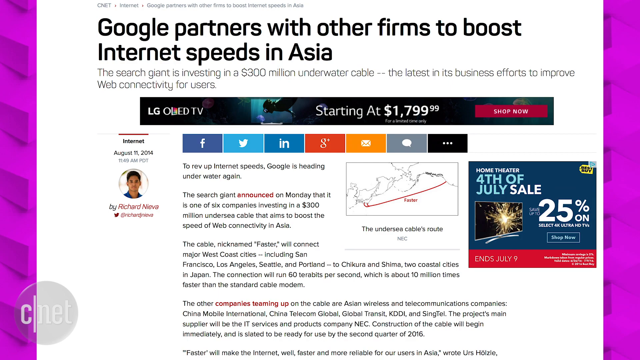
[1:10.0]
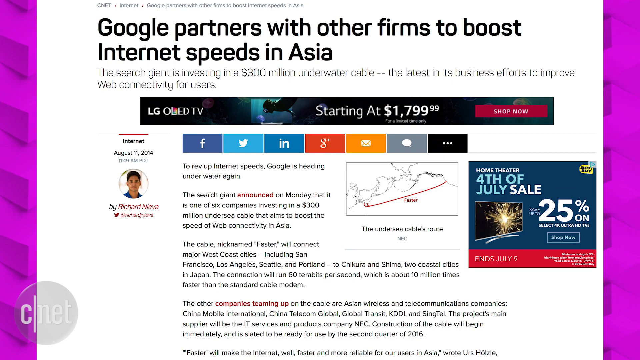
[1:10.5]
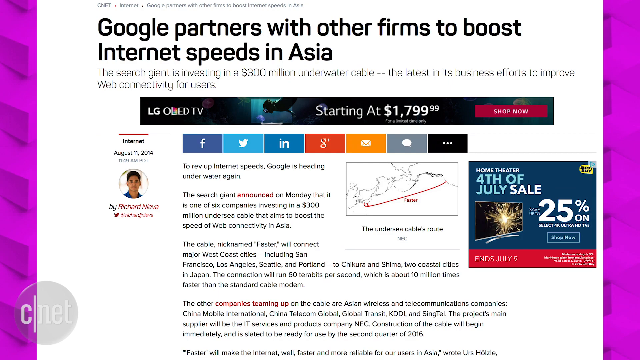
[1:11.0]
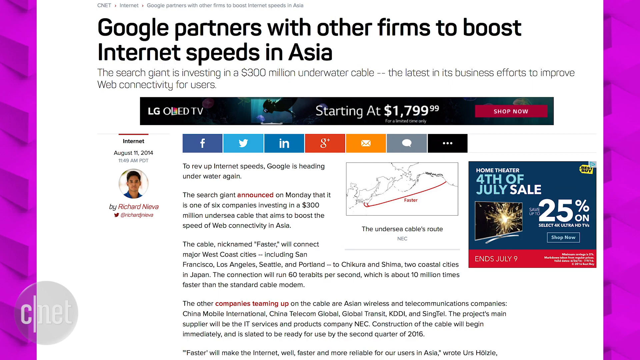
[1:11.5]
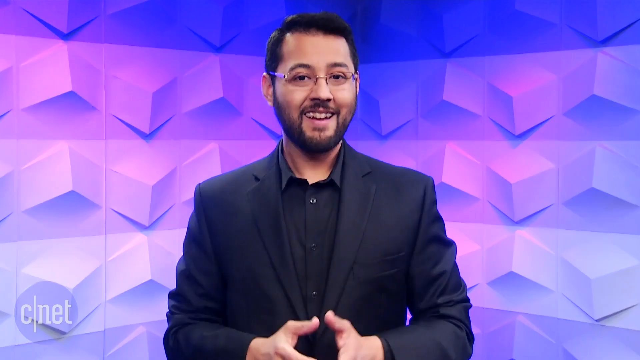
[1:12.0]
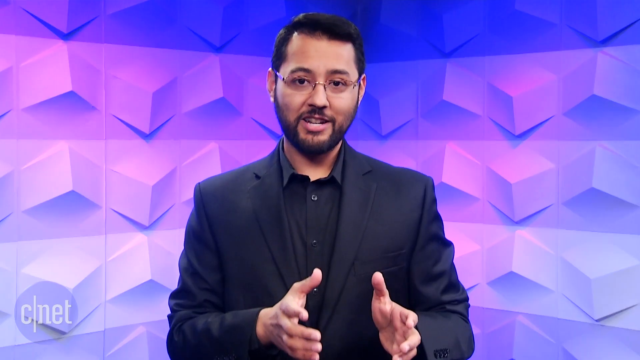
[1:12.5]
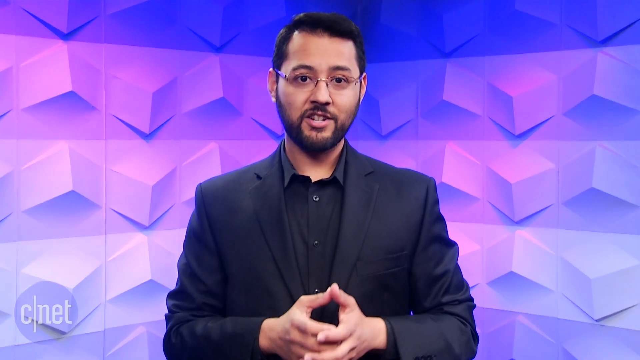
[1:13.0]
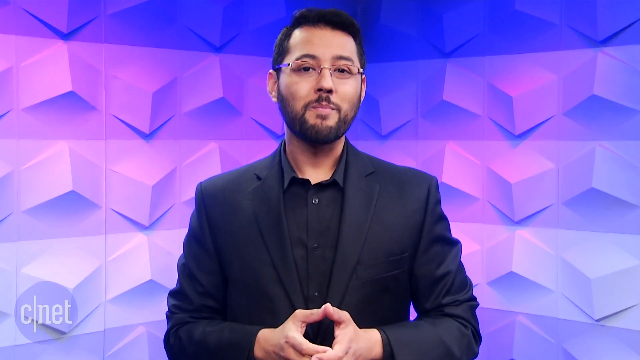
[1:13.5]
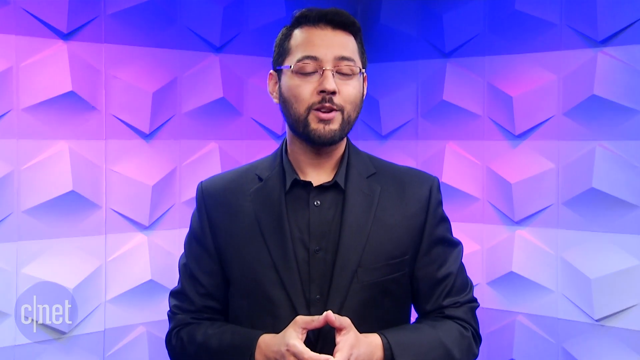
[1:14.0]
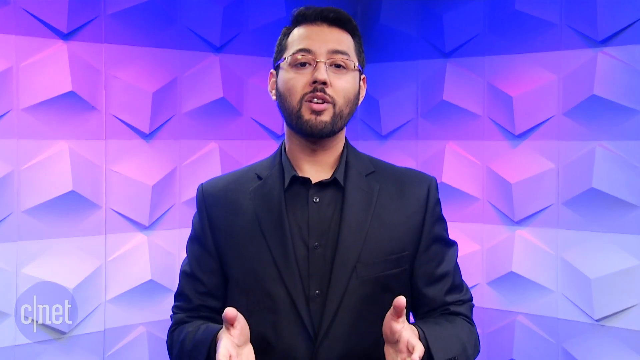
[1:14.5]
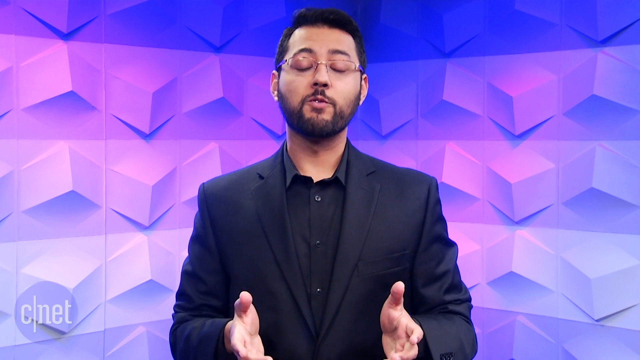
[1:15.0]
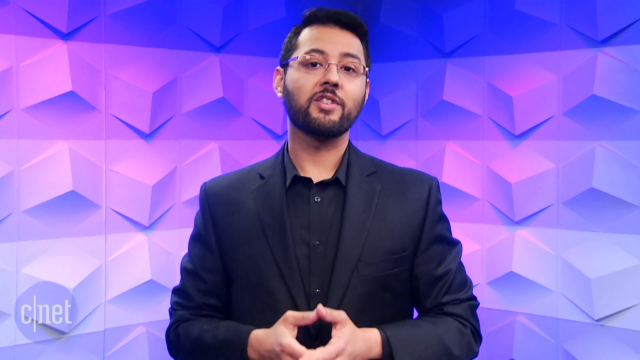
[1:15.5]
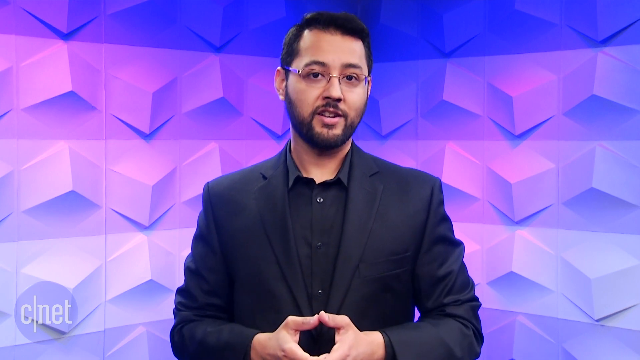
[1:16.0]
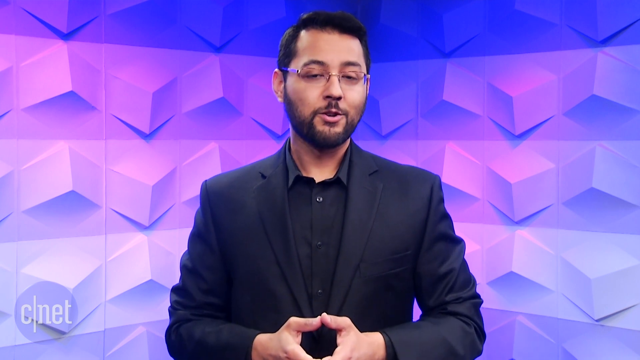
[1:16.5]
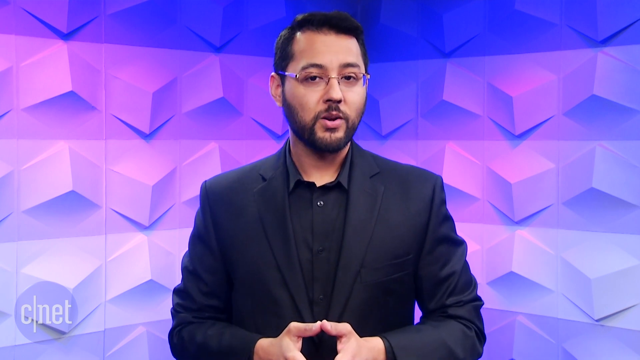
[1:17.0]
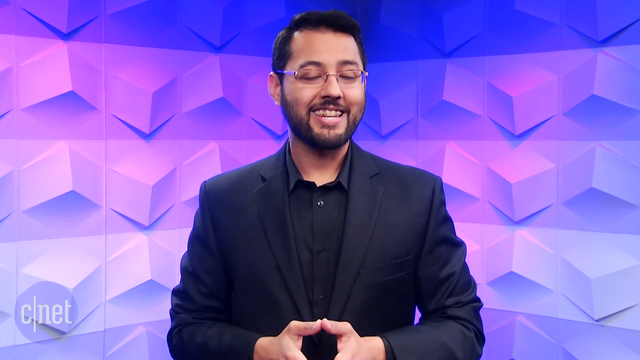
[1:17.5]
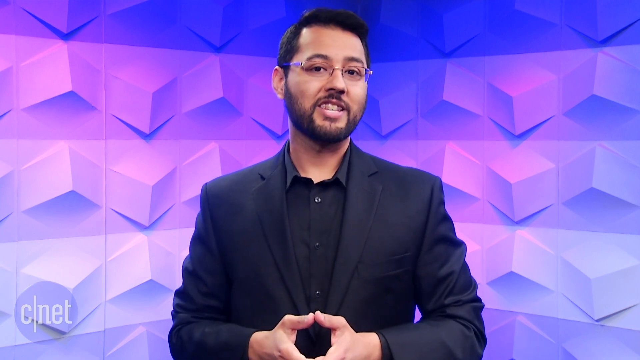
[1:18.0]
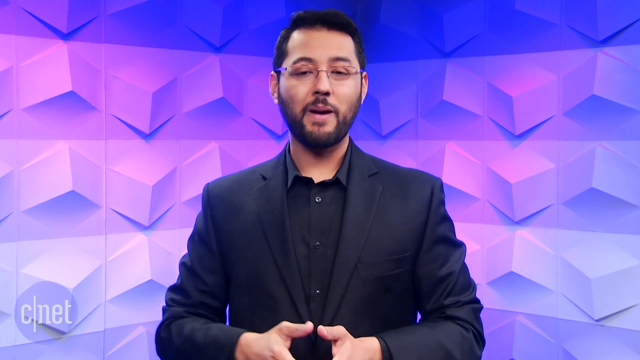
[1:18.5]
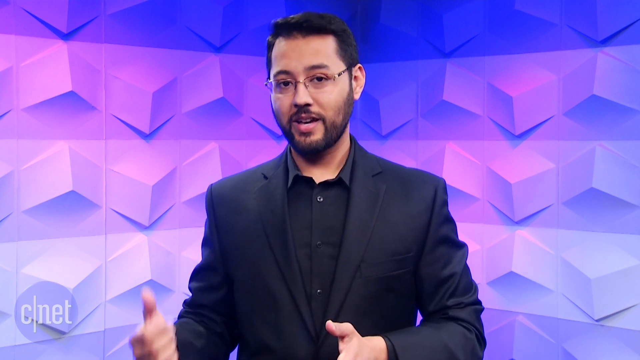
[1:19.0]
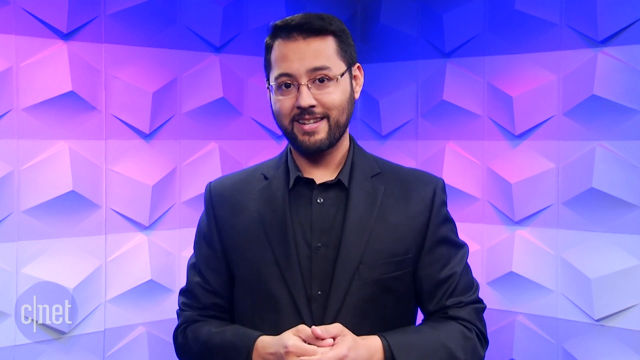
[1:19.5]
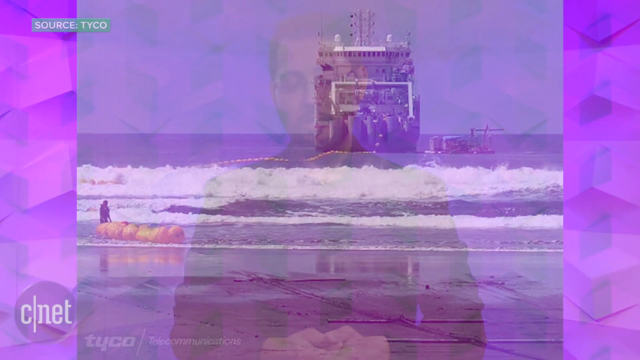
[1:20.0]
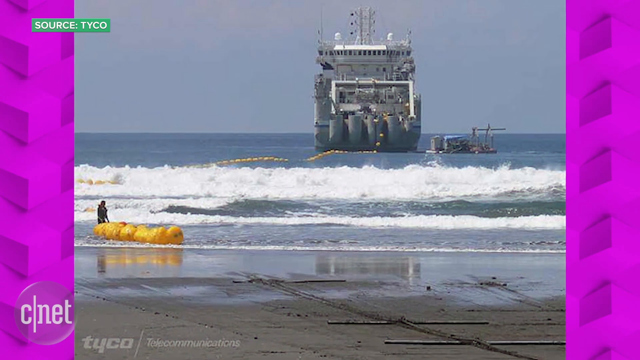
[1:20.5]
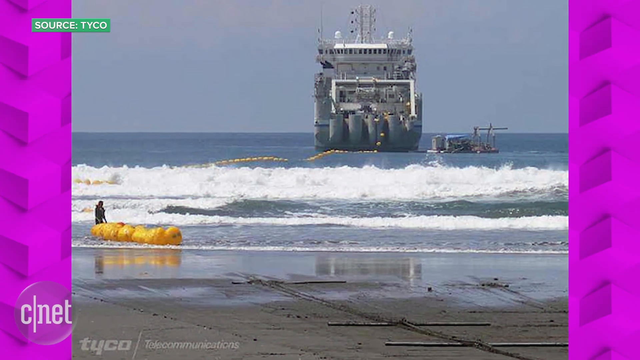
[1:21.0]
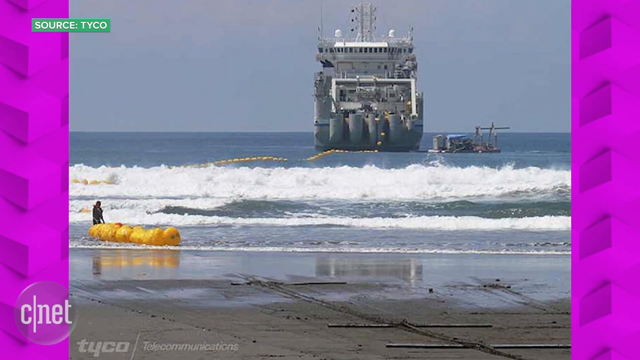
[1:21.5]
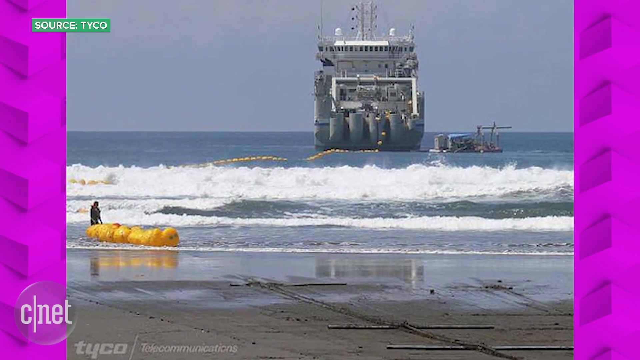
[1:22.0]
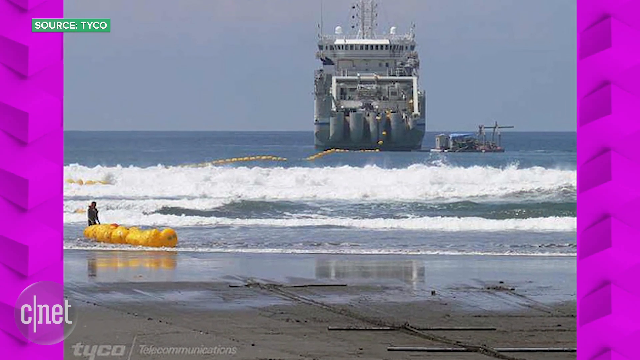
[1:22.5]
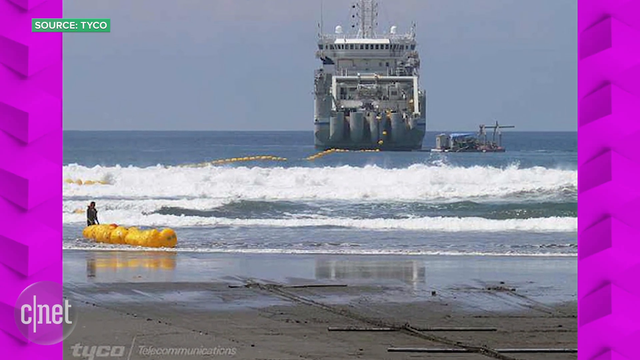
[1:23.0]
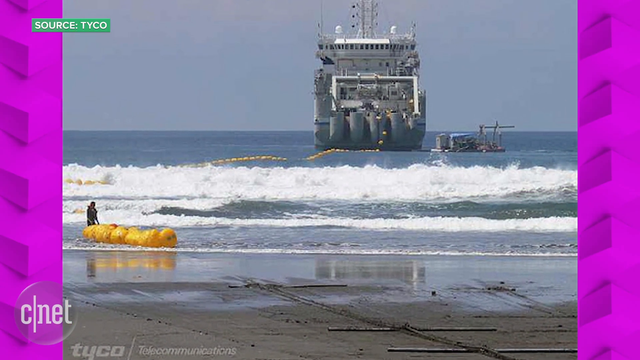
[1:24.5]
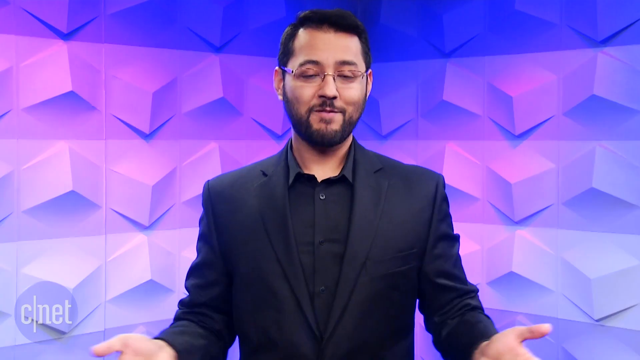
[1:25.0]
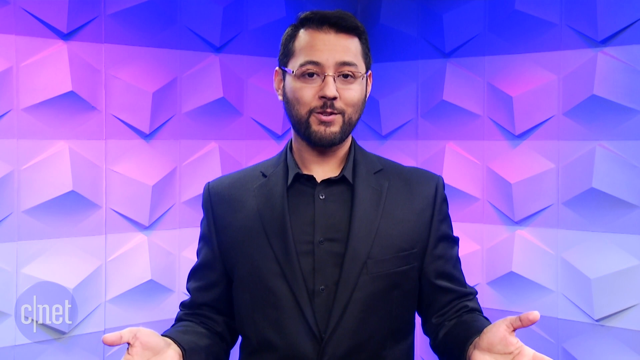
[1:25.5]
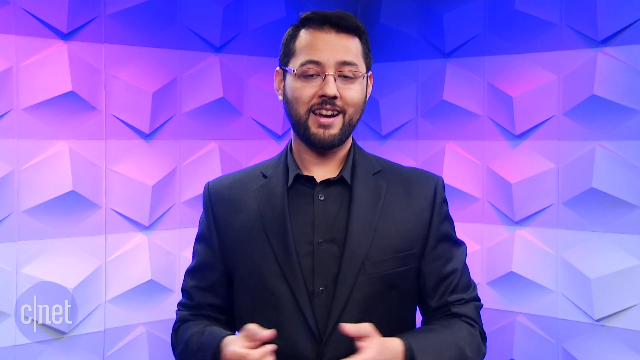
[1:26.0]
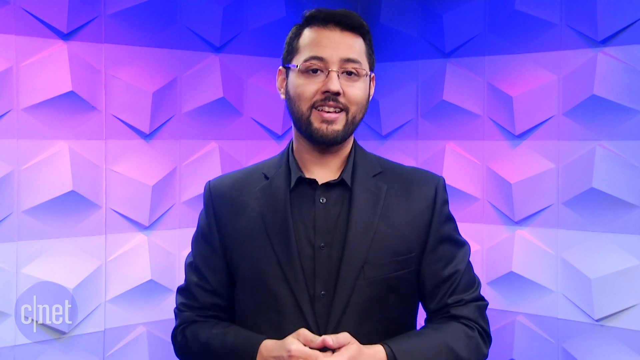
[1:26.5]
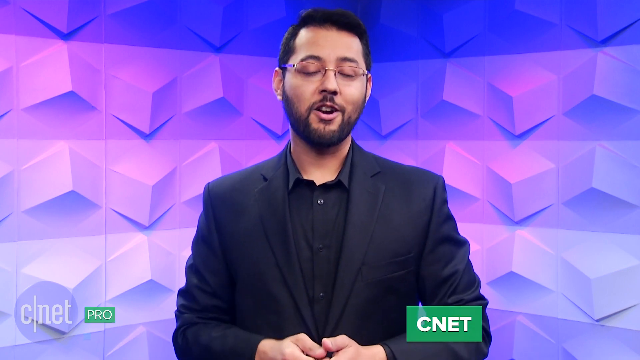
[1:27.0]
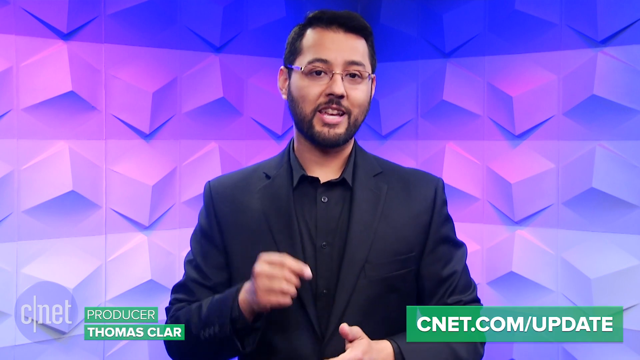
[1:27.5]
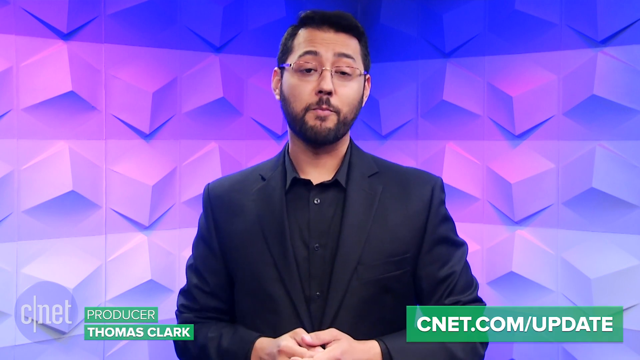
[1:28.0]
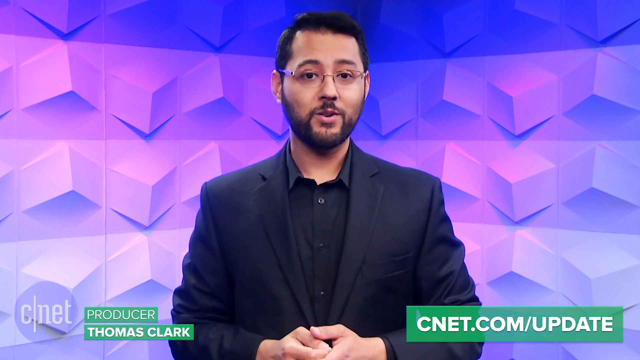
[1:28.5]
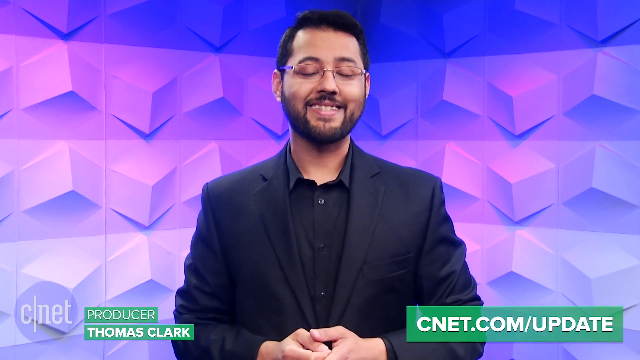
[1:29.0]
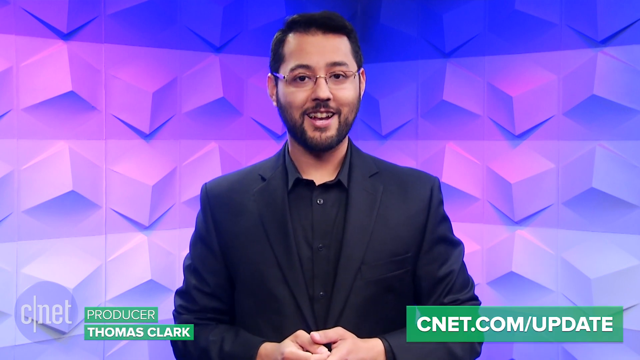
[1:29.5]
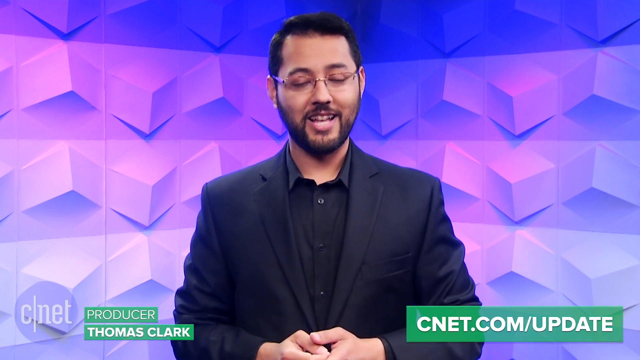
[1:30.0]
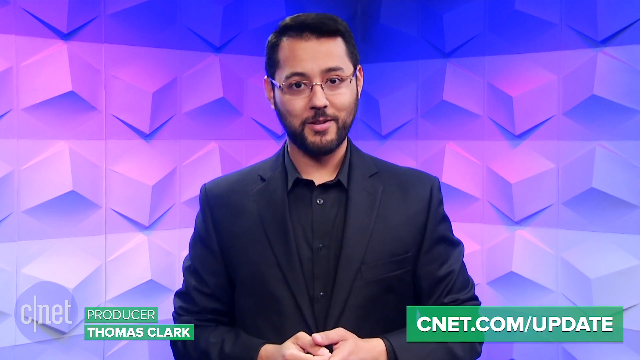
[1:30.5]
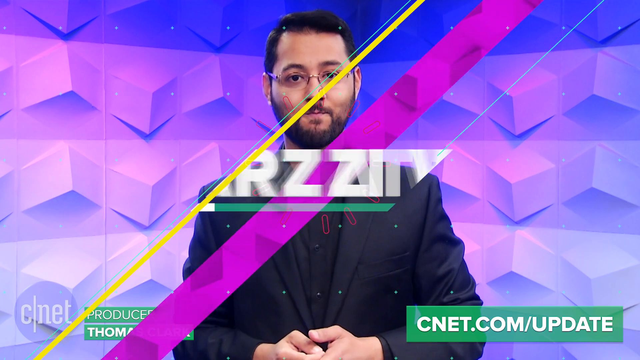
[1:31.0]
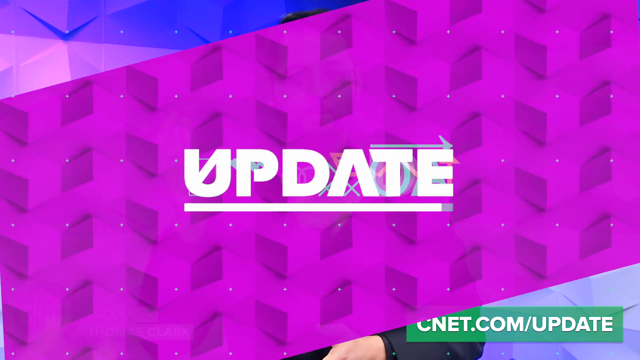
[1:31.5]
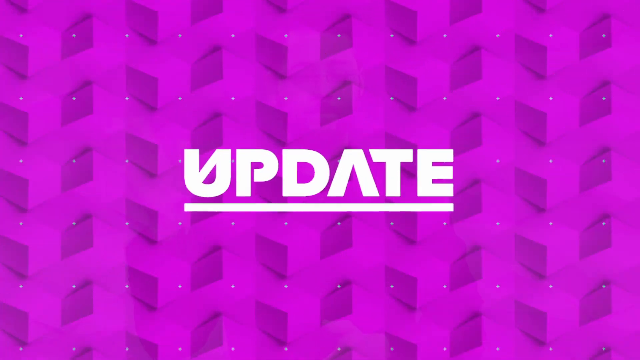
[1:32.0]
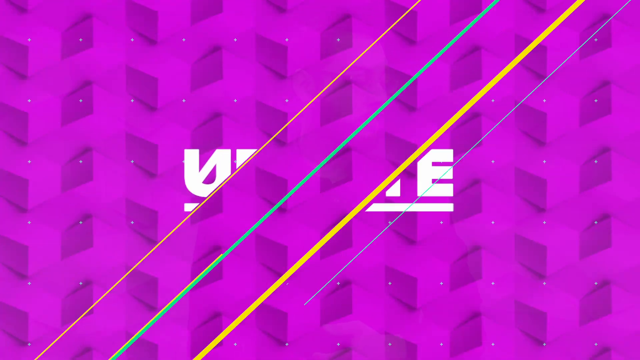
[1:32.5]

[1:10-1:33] The focus is on a screenshot of writing from a website with the headline "Google partners with other firms to boost internet speed in Asia," and other headlines are visible on the page. The setting changes to the studio and the young news anchor in a black suit. Next comes a picture of an ocean with a ship trying to dock and a man walking beside the ocean, apparently showing where the internet cables are going to be laid. The video then returns to the man in the studio.